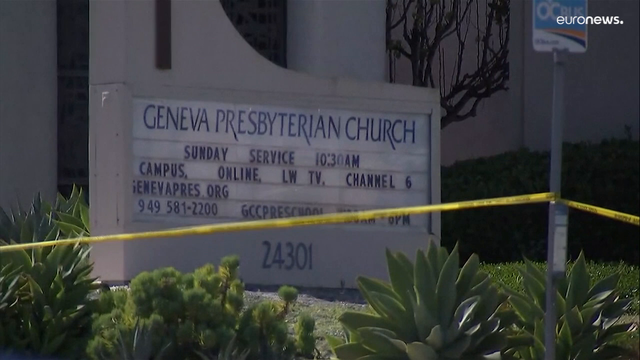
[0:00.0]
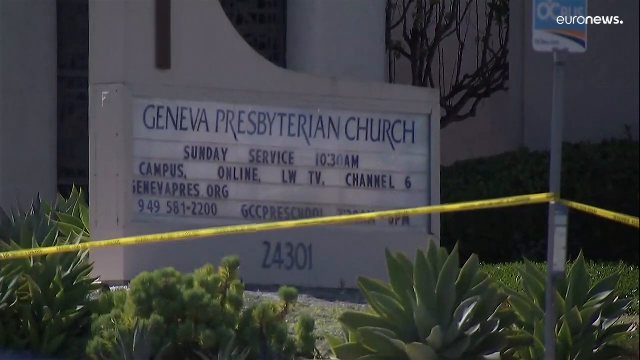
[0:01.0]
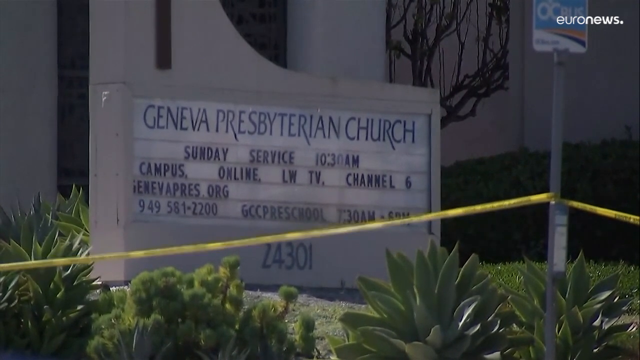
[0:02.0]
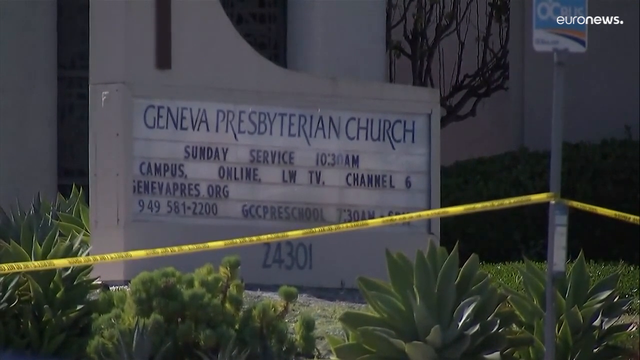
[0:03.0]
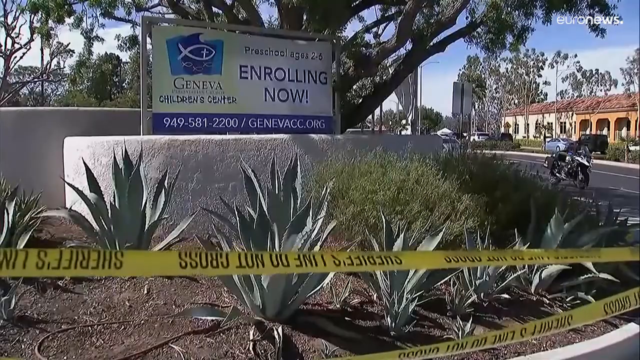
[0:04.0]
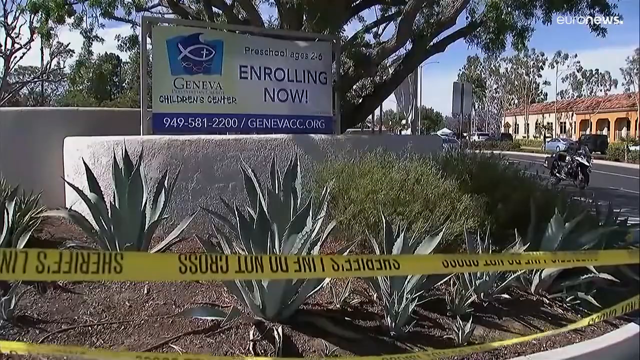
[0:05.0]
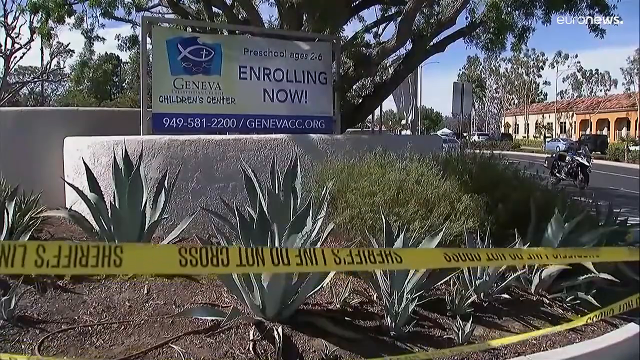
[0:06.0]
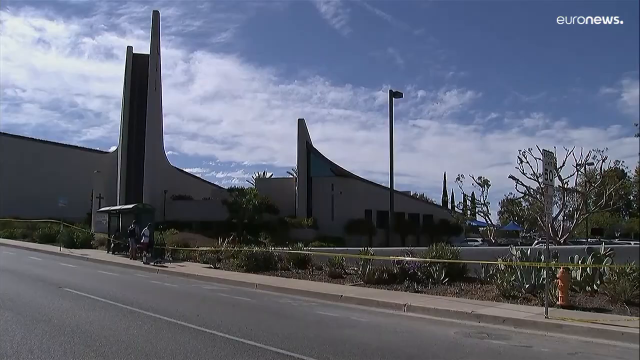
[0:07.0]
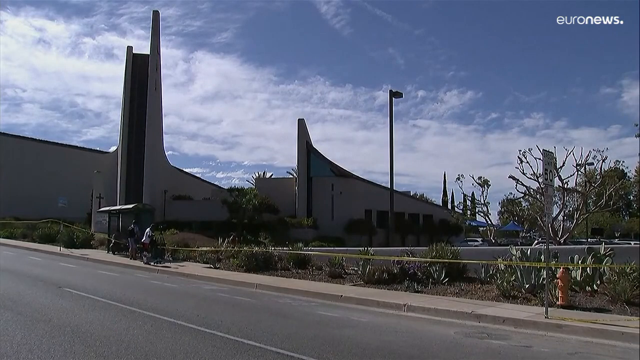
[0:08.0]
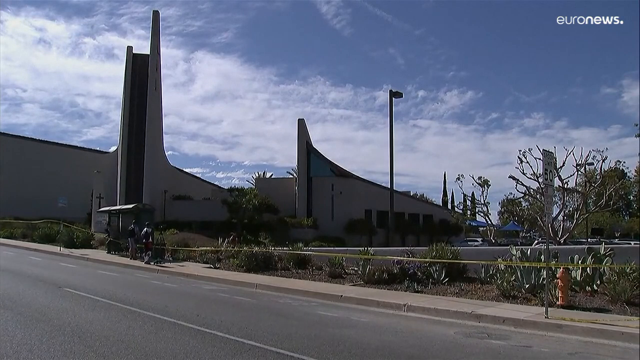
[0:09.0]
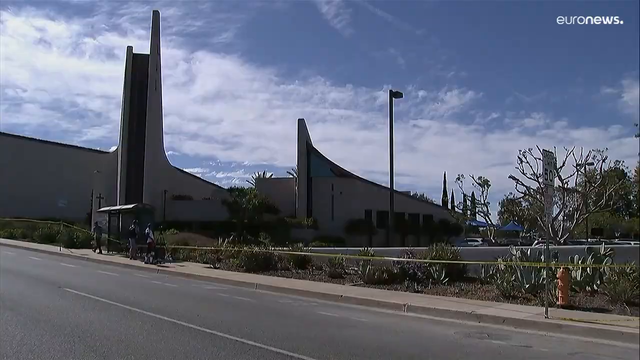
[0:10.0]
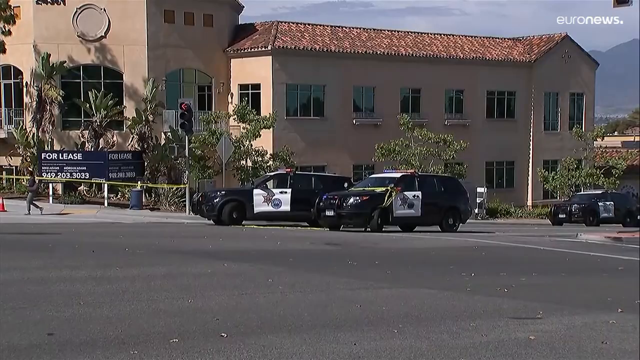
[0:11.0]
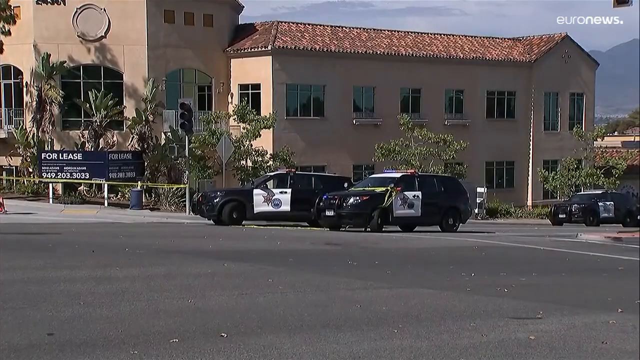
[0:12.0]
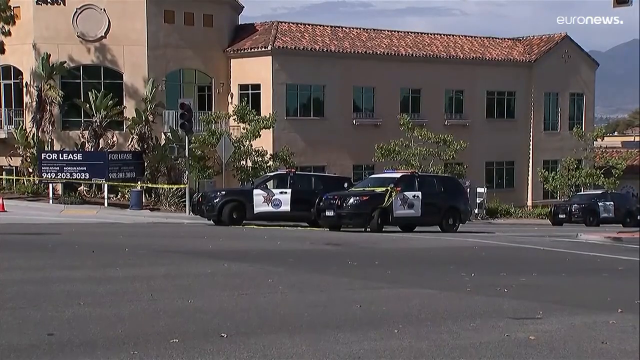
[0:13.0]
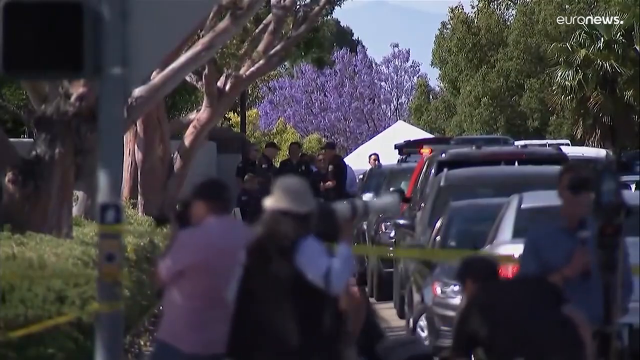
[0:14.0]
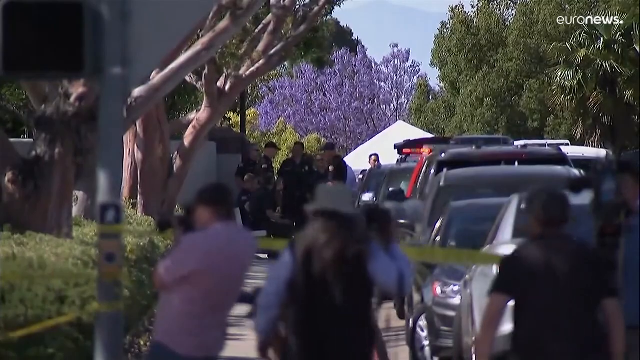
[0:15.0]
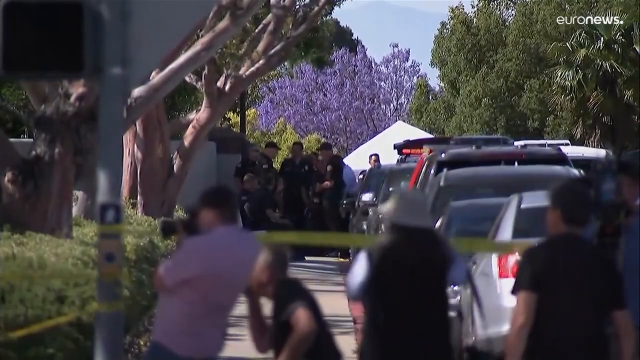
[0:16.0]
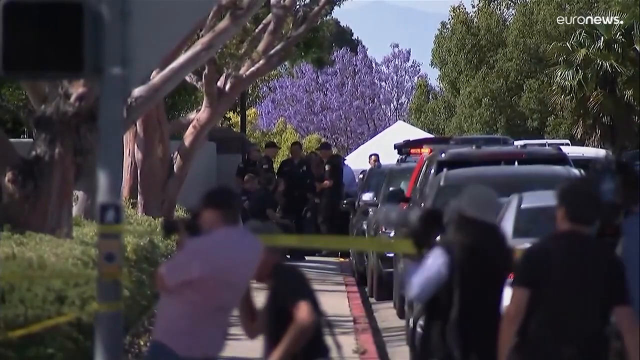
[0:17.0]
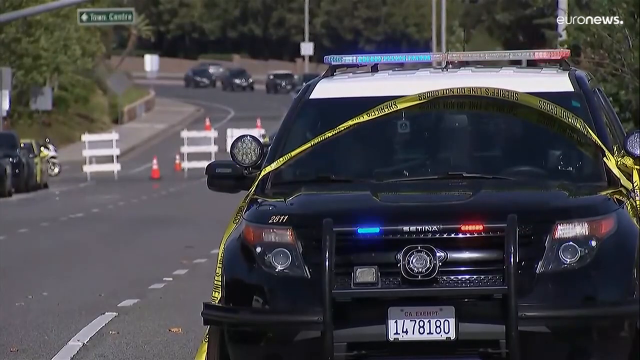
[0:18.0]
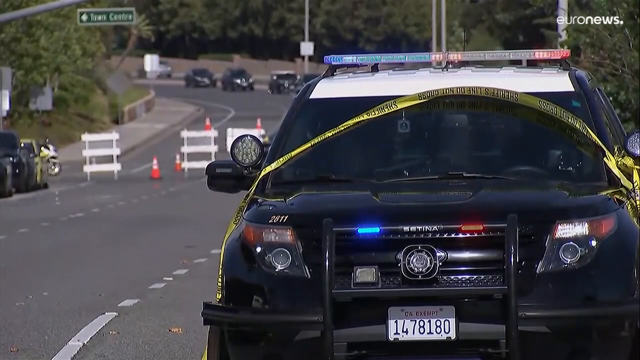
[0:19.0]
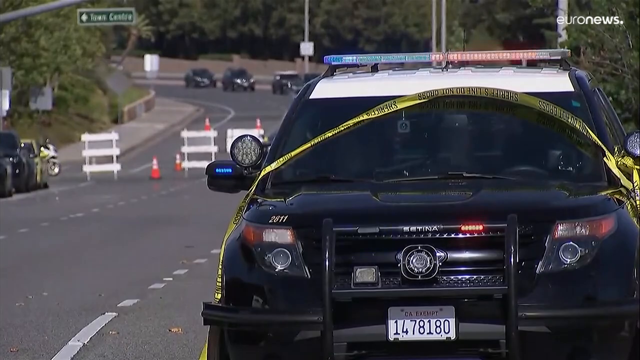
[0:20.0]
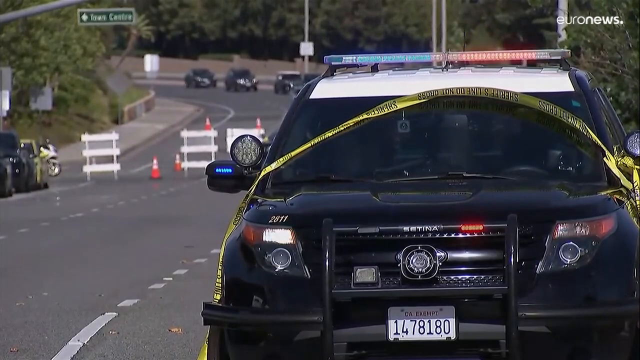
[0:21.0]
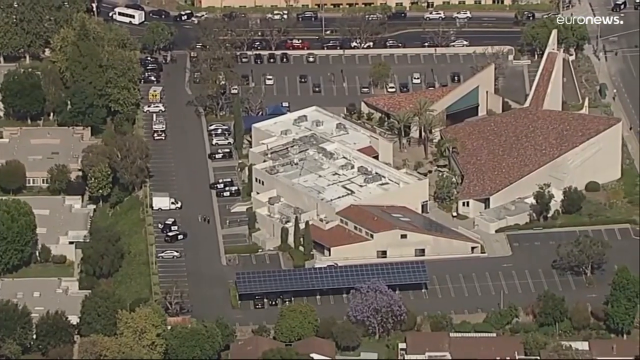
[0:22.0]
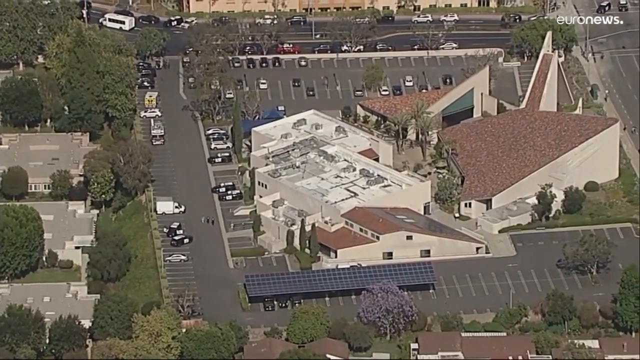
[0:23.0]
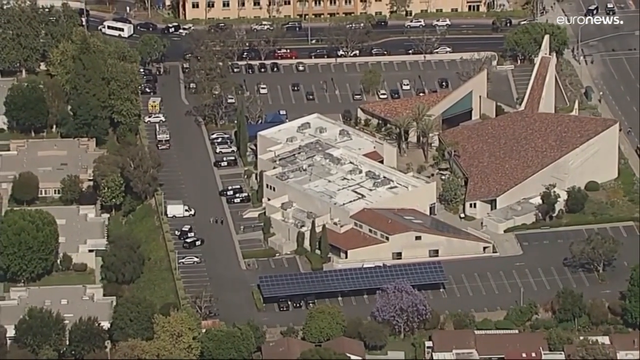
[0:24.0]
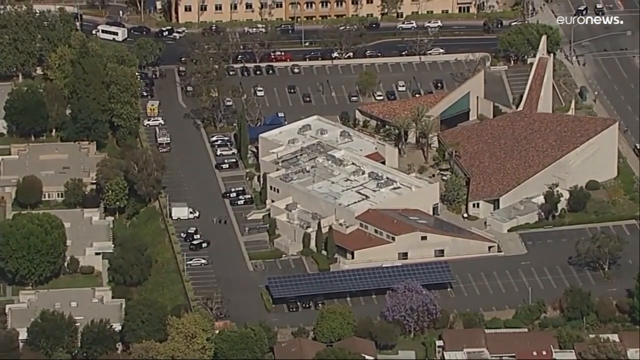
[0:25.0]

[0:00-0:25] Police tape marked "do not cross police line" surrounds a large area. The Genova Presbyterian Church is there, and it looks like it may have a school as well; a sign says "now enrolling". The police tape is basically drawn around the perimeter of the church and school facility. Three police cars are on one side, and another police car is shown where the streets are blocked, sitting past the blockade. Greenery, shrubs and trees surround the area. Next, reporters are taking pictures: of a couple of reporters, one is bent down, kneeling and taking pictures, while another, camera in hand, is walking, apparently to find another location. At a distance, about six policemen stand on the sidewalk, perhaps 10 to 15 feet past where the reporters are standing.